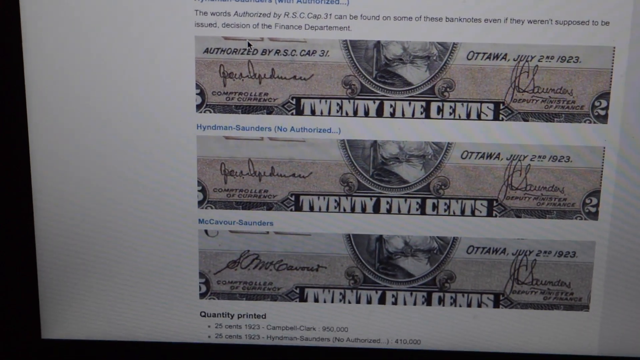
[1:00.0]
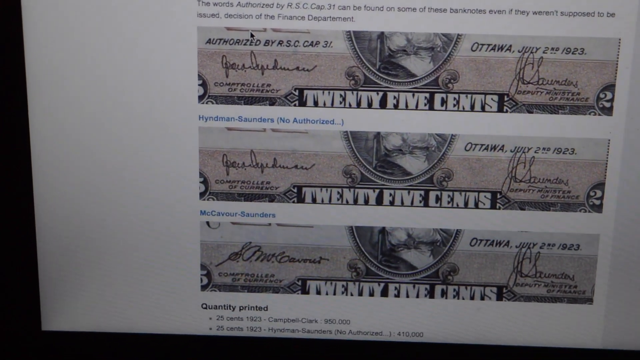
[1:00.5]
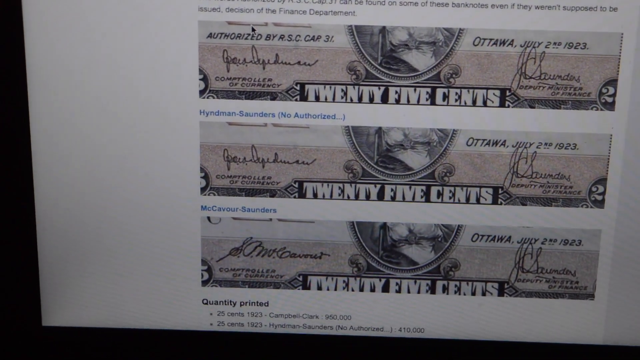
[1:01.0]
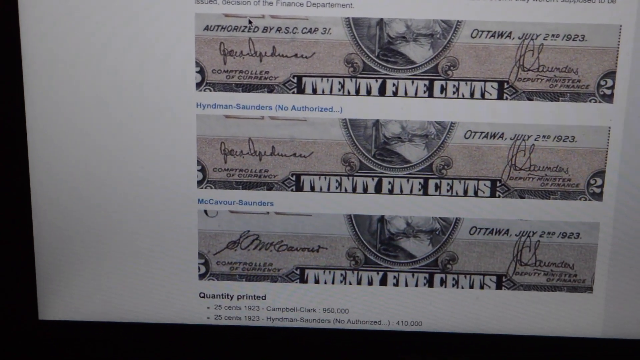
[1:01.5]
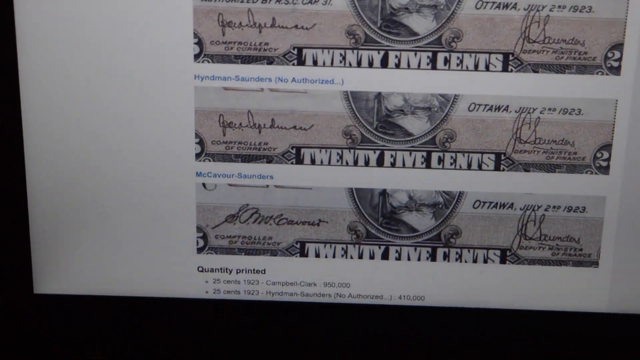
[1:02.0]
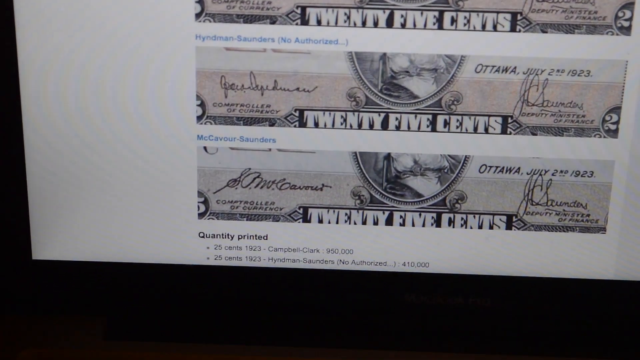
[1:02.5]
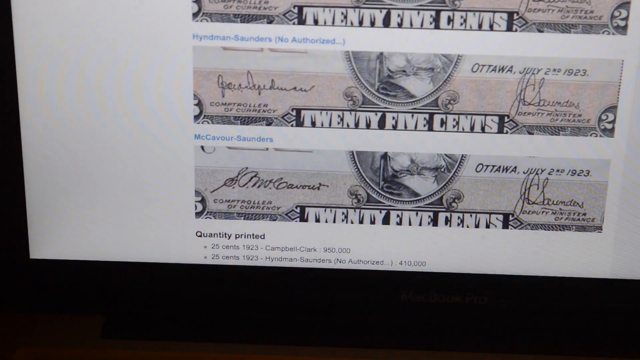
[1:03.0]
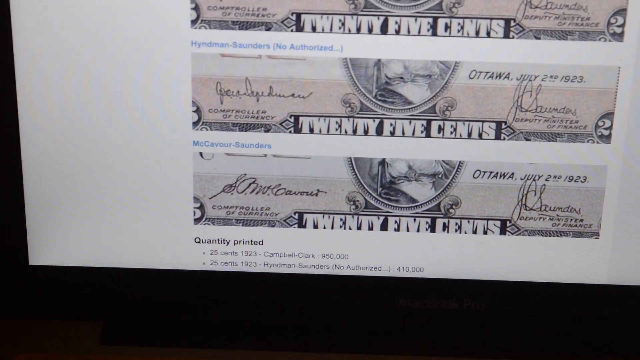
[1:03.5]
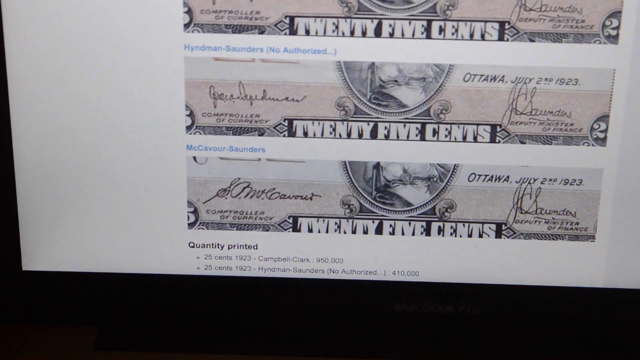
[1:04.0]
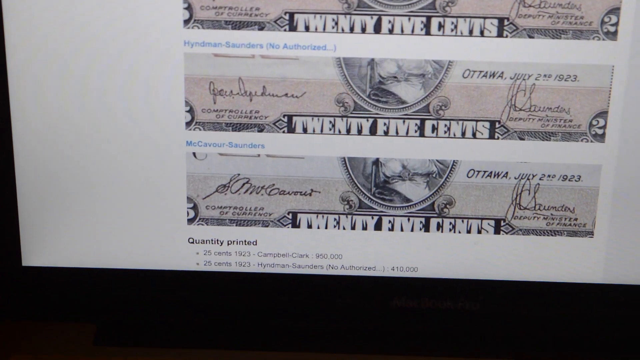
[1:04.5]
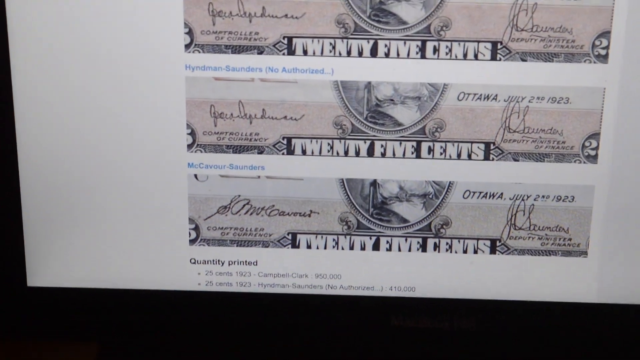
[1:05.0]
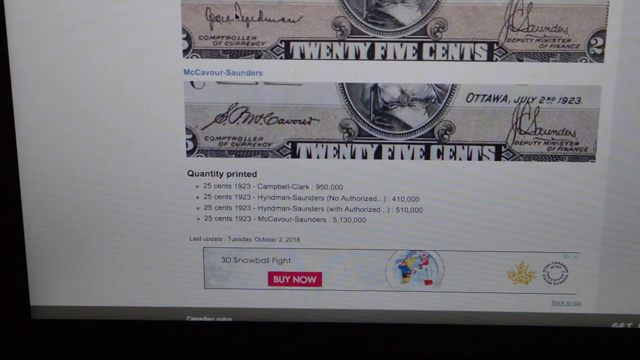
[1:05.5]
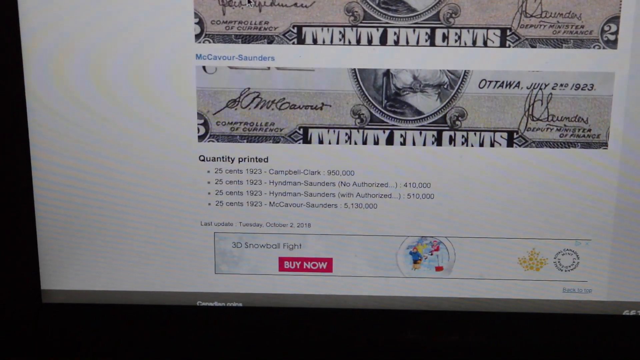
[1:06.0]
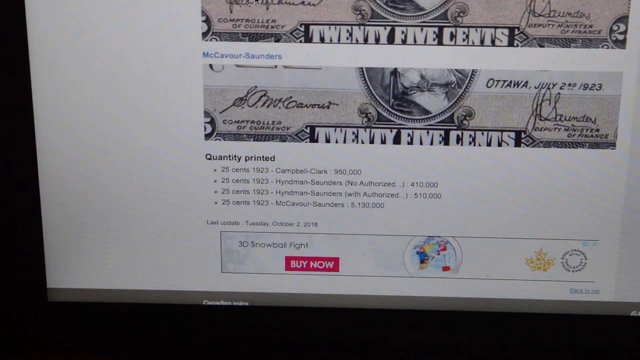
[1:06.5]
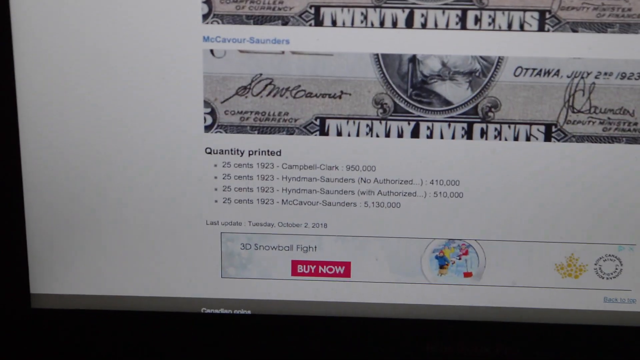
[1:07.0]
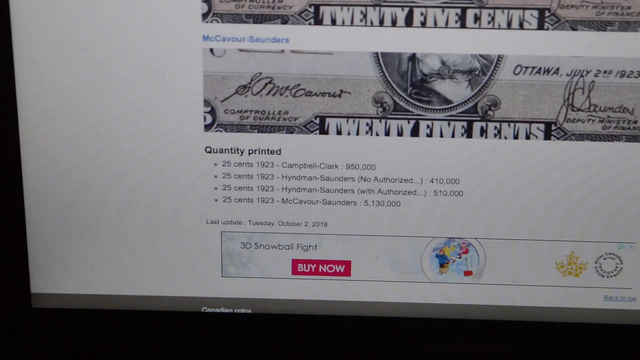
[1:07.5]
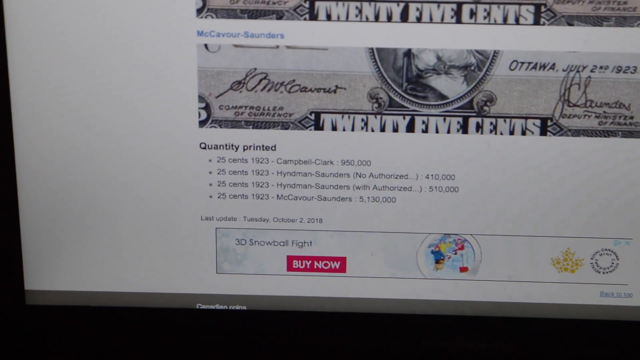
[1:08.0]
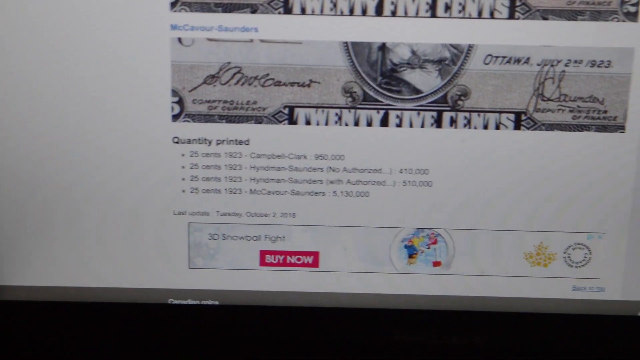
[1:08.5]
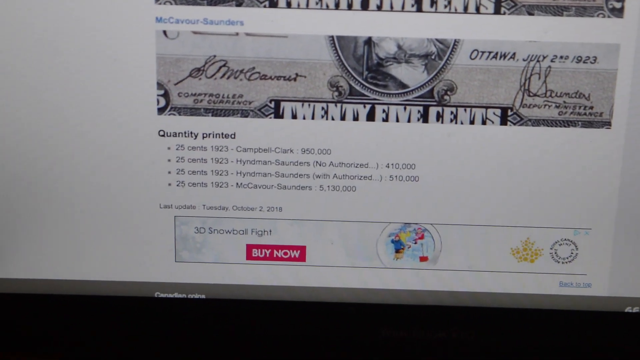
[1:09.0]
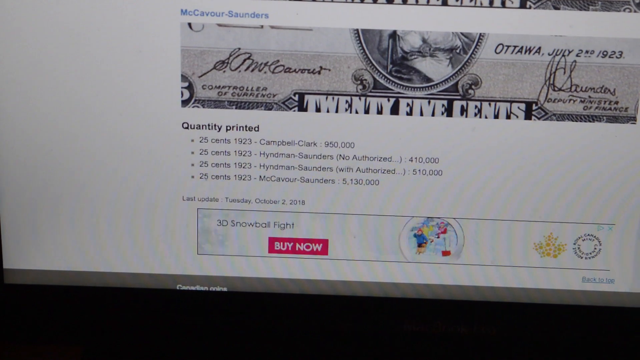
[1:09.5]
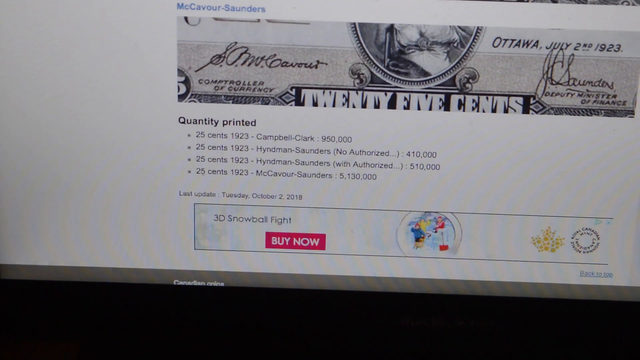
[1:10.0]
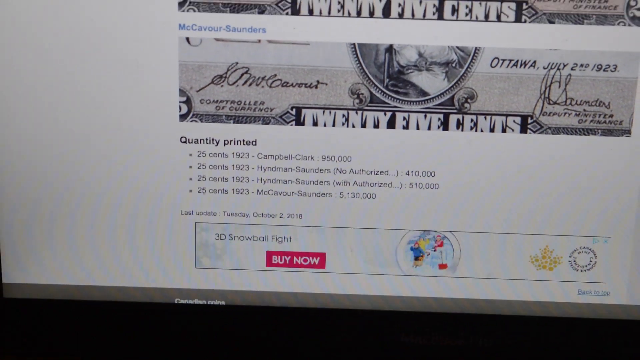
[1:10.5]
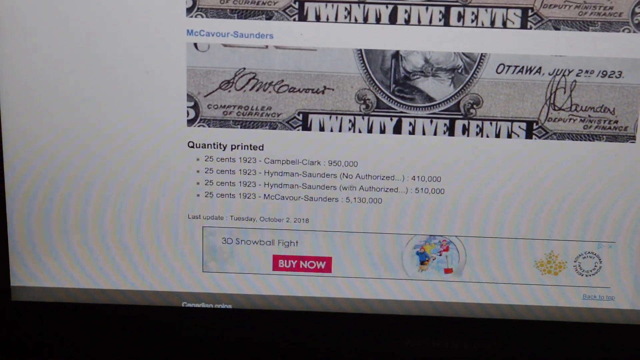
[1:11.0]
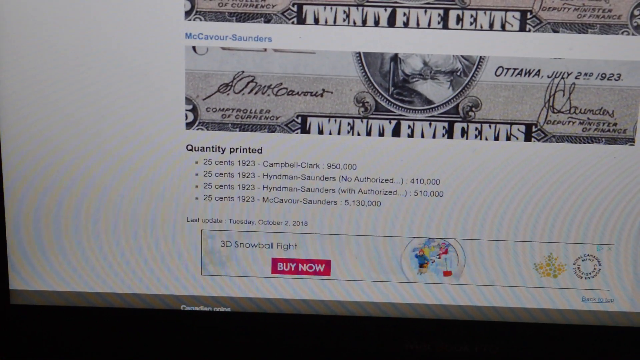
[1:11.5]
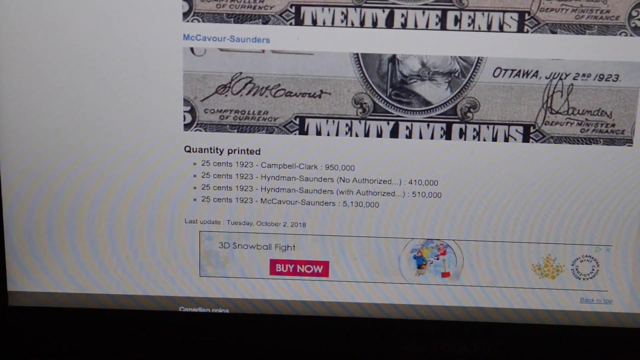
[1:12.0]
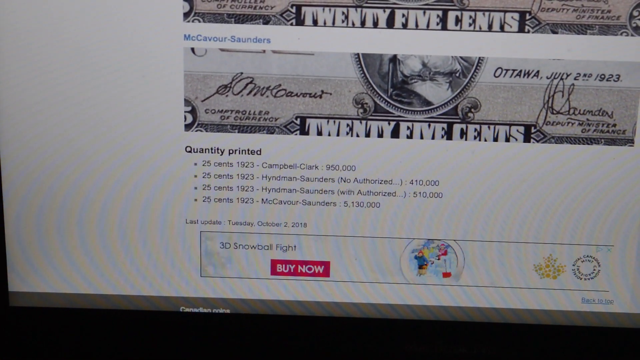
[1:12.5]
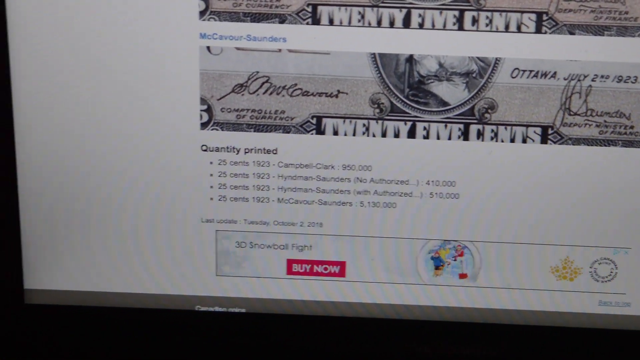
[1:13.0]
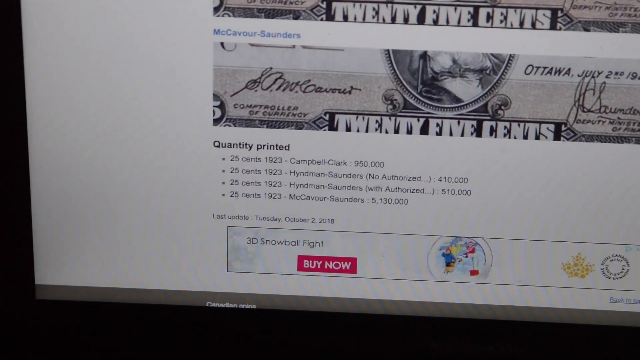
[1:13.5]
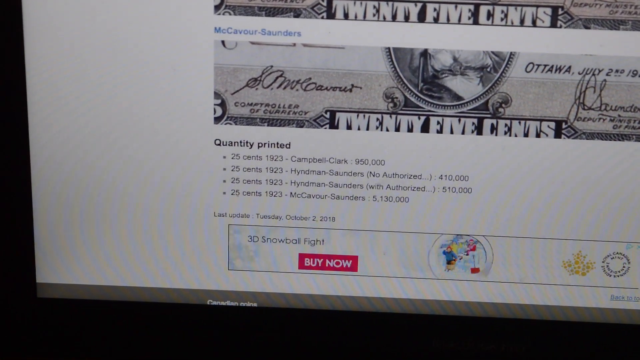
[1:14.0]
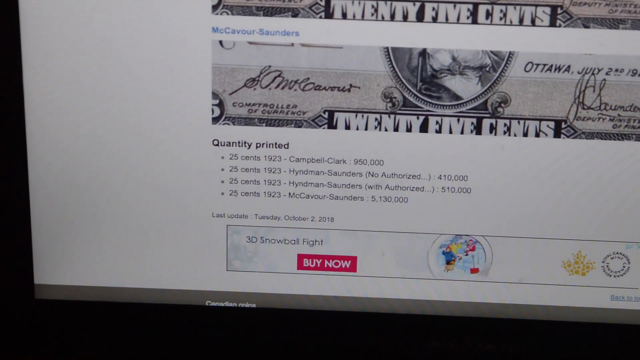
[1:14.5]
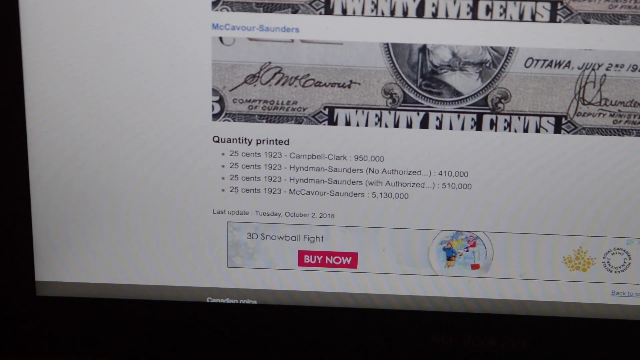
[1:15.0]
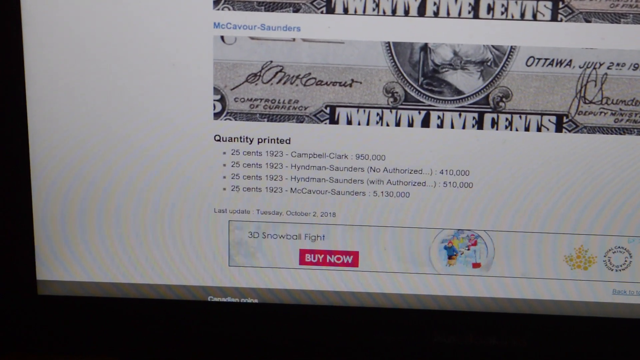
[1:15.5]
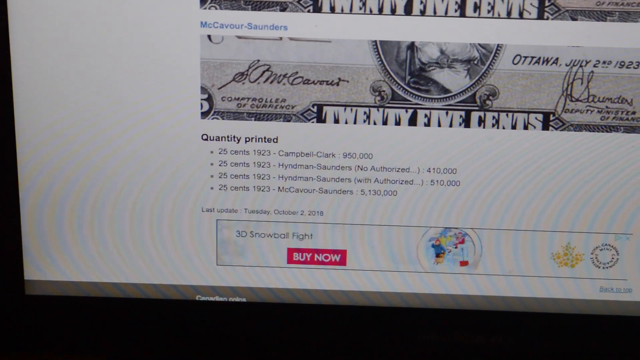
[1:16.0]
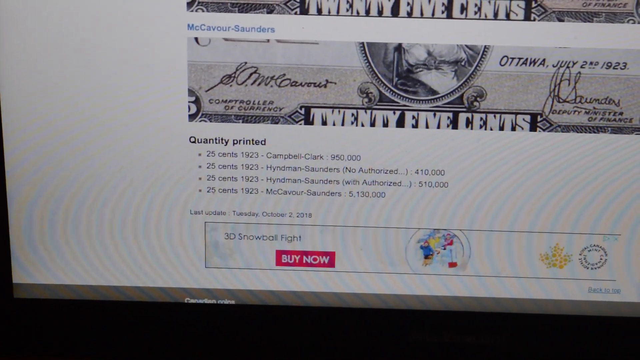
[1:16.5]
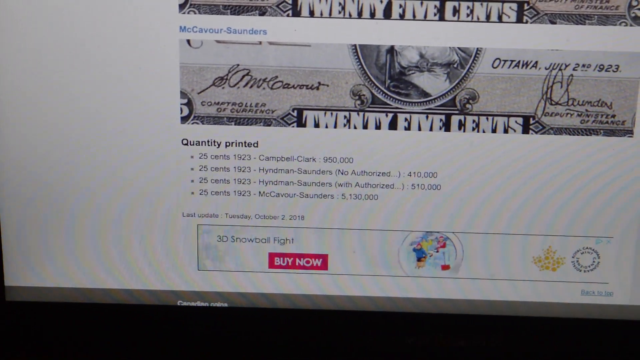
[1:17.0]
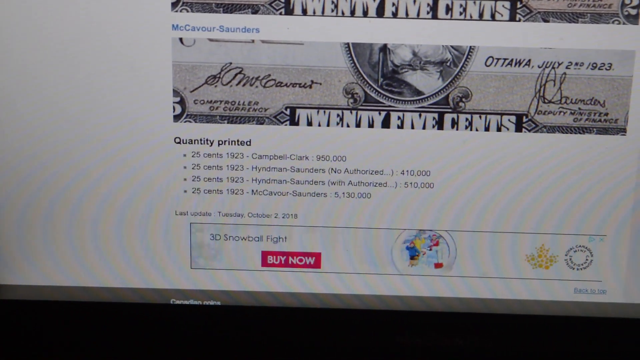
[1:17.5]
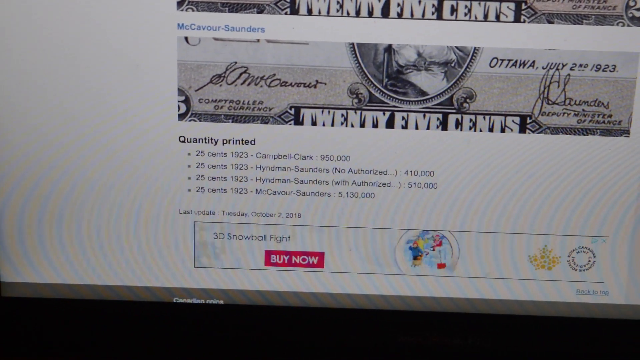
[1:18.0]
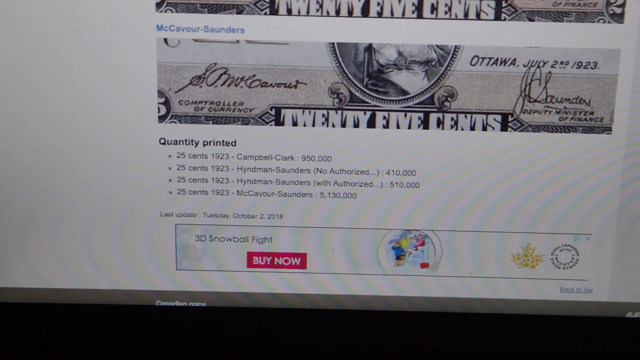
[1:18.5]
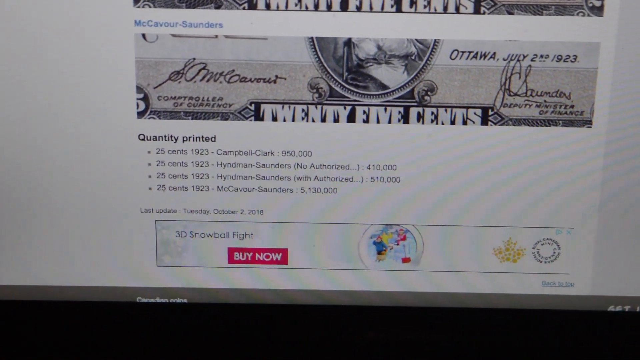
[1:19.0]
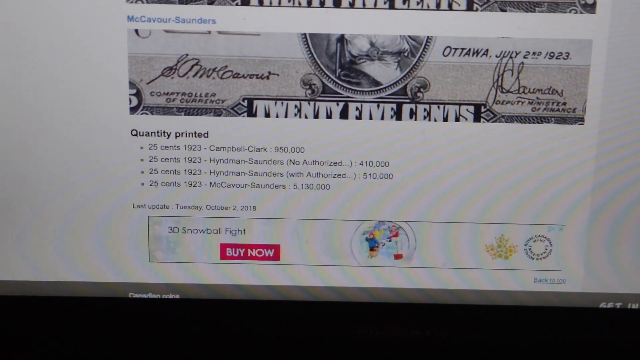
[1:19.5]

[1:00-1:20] Four copies the man has made of the Dominion of Canada bill are on a white sheet of paper, each saying "25 cents." The woman is at the top with her pitchfork, only the bottom side of which can kind of be seen. The page says "quantity printed" and "buy now," has a little photo of the earth at the bottom, and says "Ottawa." "1923" appears four times at the bottom of the screen.